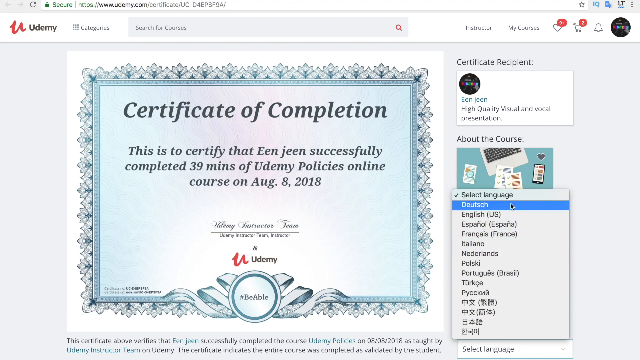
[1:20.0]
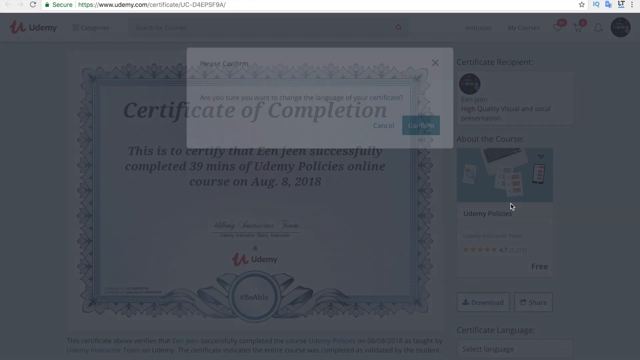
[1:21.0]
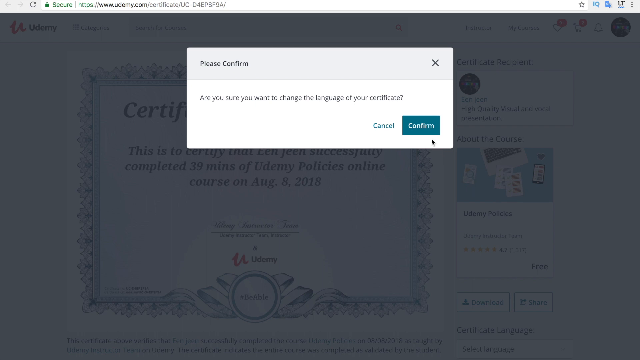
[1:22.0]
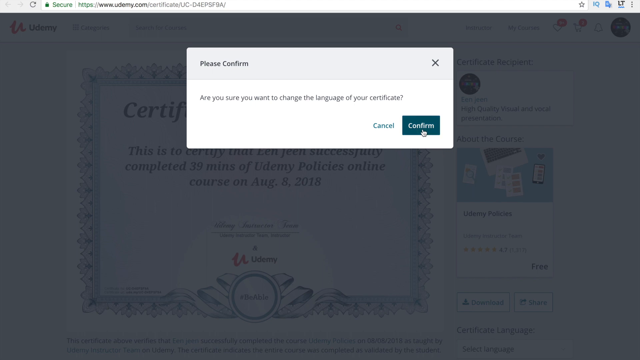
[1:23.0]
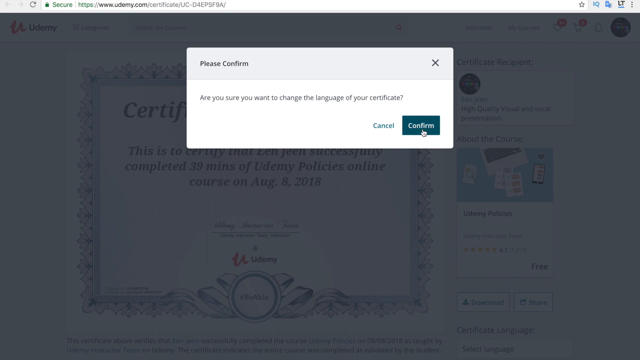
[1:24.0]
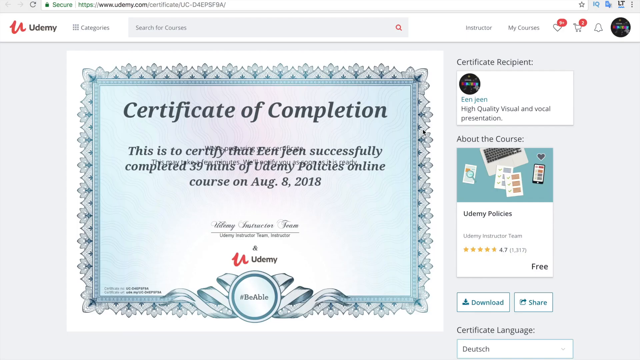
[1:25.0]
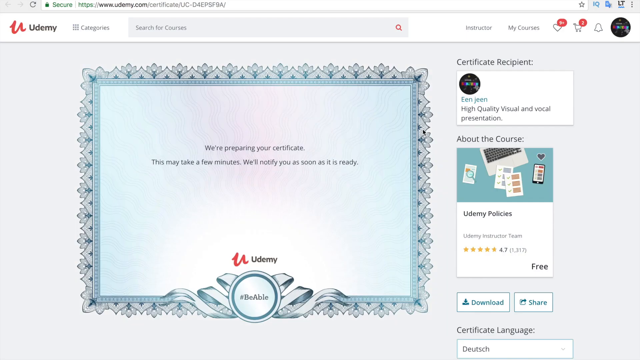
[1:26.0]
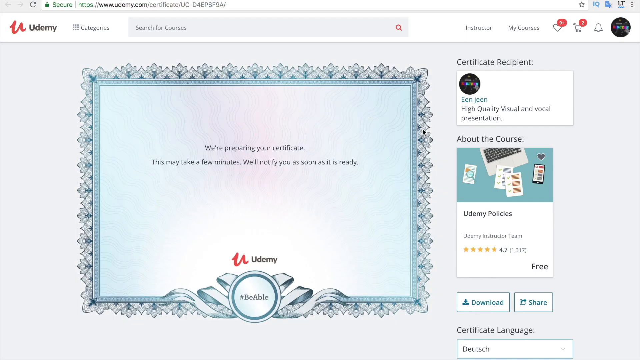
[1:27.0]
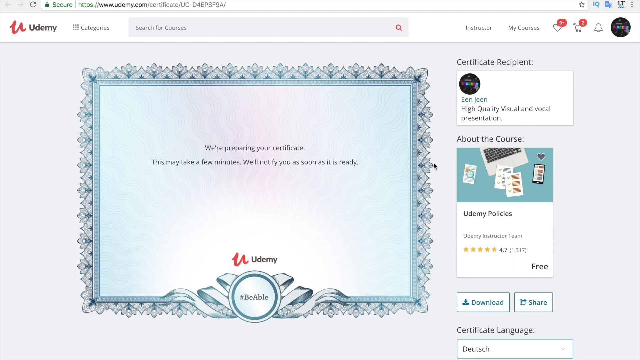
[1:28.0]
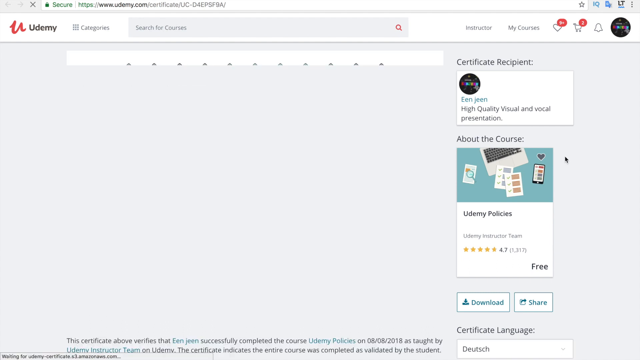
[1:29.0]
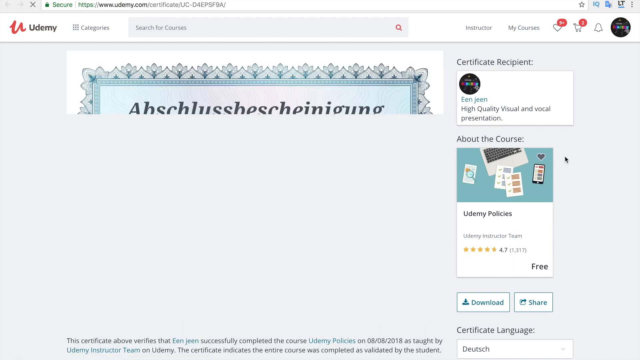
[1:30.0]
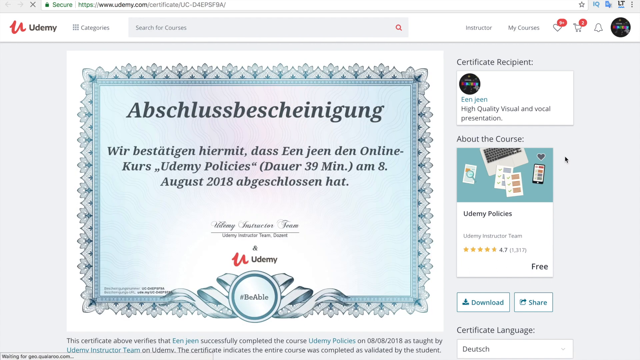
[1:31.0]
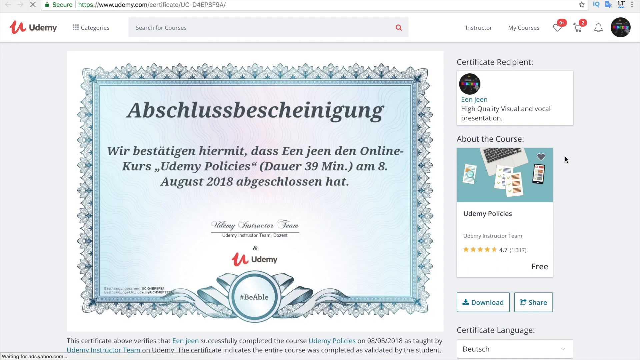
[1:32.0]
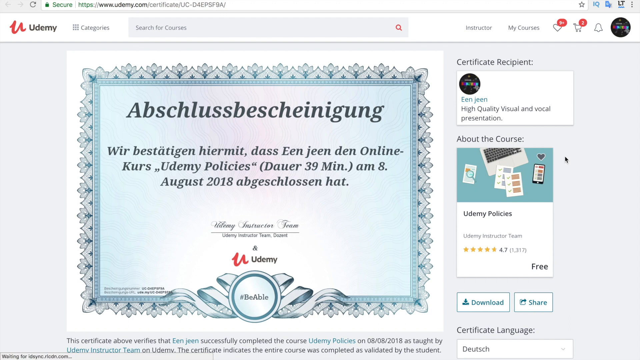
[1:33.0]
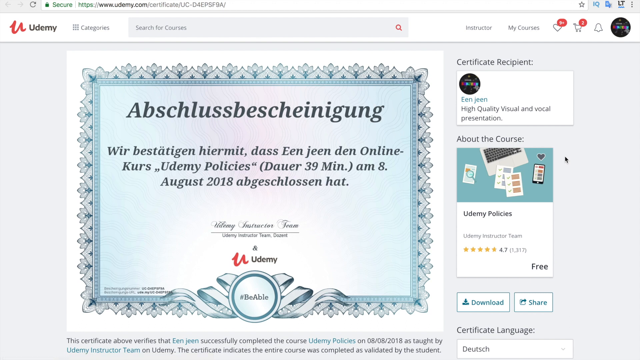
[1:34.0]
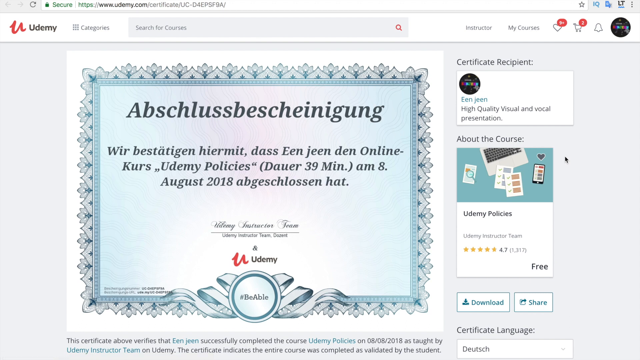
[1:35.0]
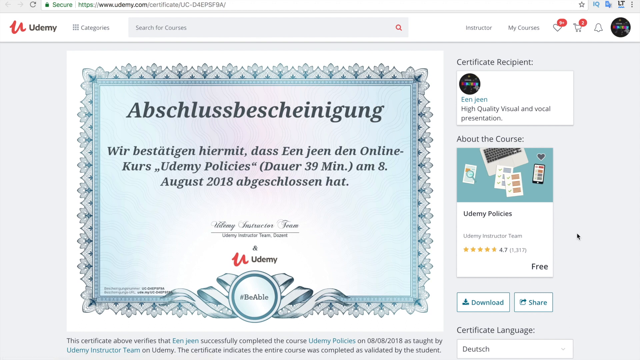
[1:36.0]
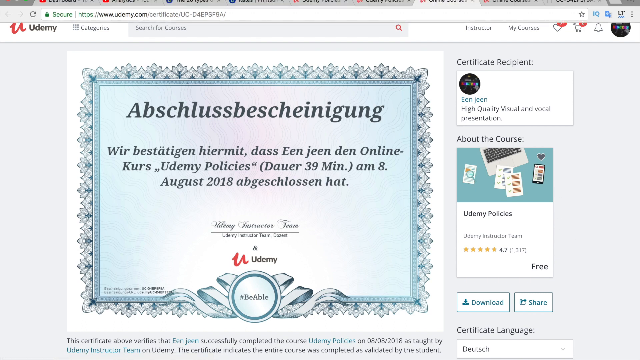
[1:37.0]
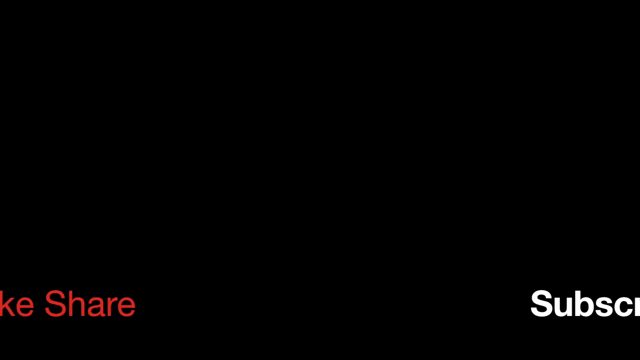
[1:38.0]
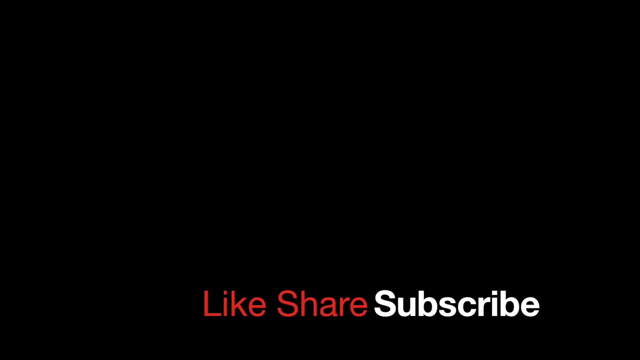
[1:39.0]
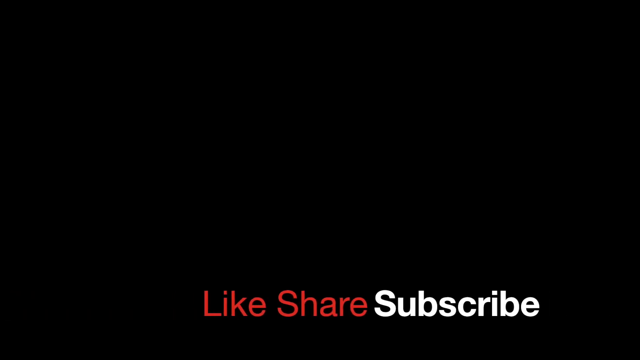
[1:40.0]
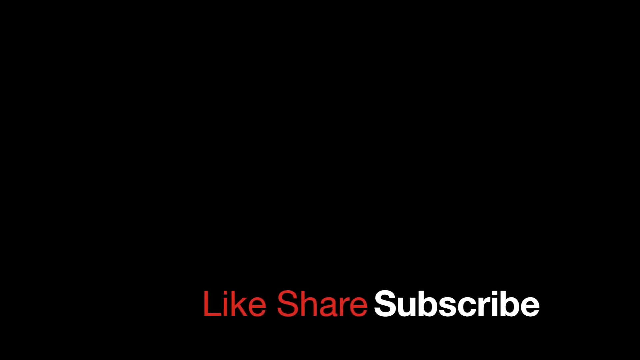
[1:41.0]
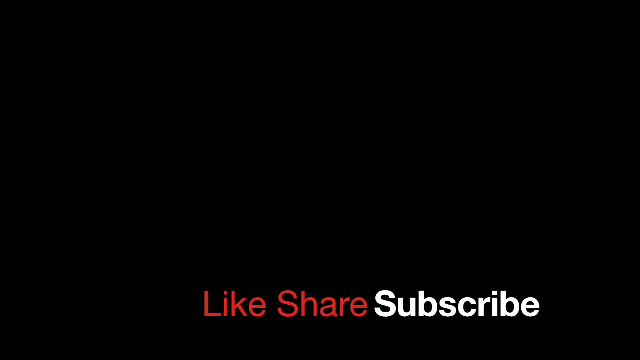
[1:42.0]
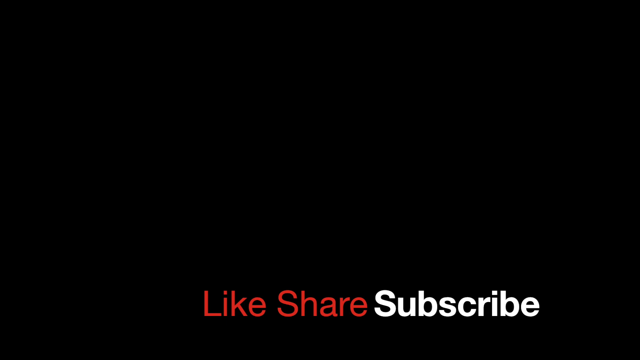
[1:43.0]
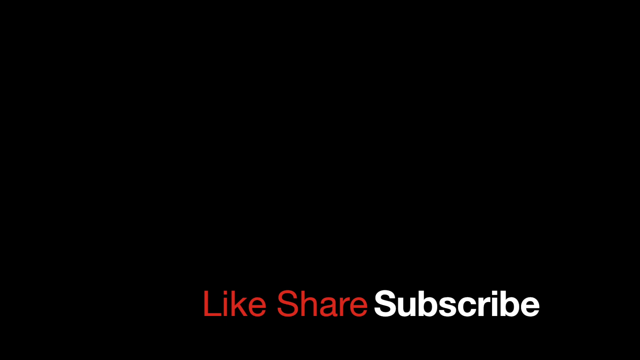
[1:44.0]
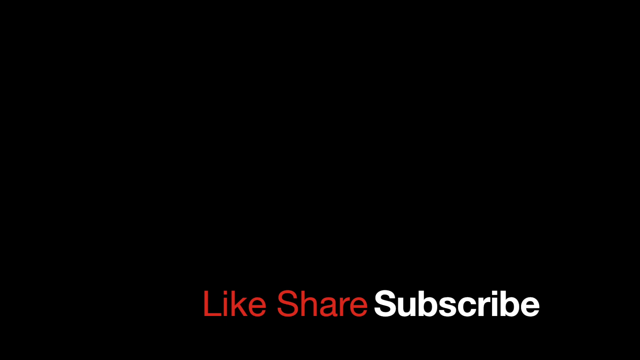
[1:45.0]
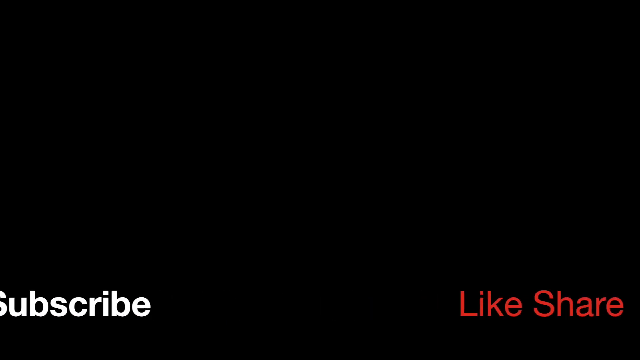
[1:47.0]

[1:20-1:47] The cursor clicks the Deutsch option, and a pop-up appears asking for confirmation, with the text "Are you sure you want to change the language of your certificate?" Cancel and confirm buttons are below it, and the mouse hovers over confirm and clicks it. Back on the certificate screen, the certificate is replaced with the text "We are preparing your certificate. This may take a few minutes. We will notify you as soon as it is ready." The mouse briefly hovers over this text, and the new certificate loads in German, where before it was in English. The mouse then moves to the top of the browser tabs. A new screen with a black background appears, with "Like Share Subscribe" at the bottom, "like" and "share" in red and "subscribe" in white. An animation crosses the words over each other as they disappear off the sides of the screen.